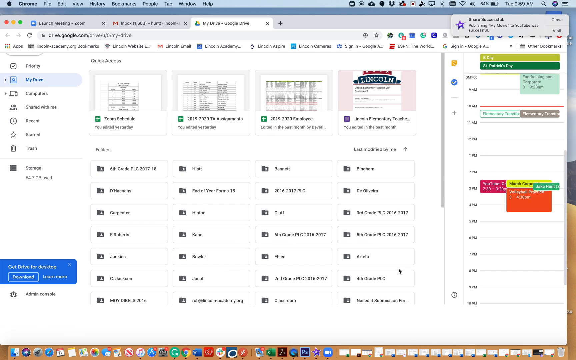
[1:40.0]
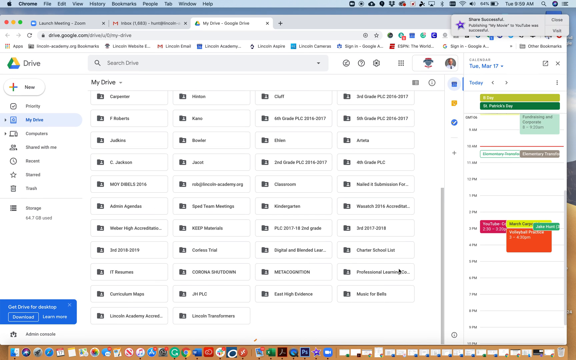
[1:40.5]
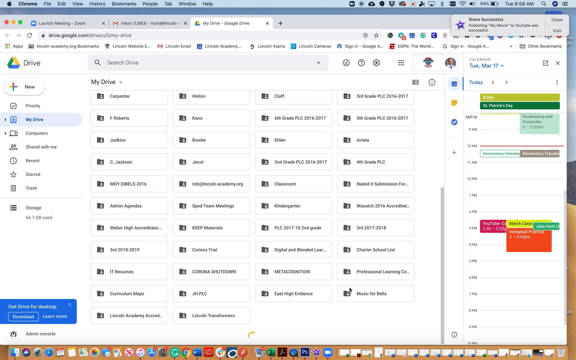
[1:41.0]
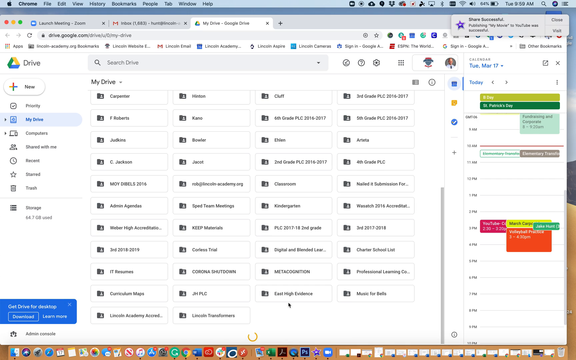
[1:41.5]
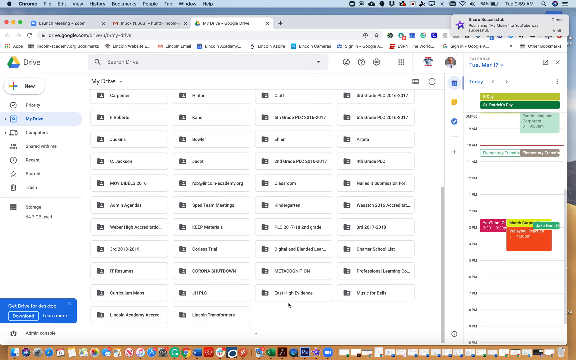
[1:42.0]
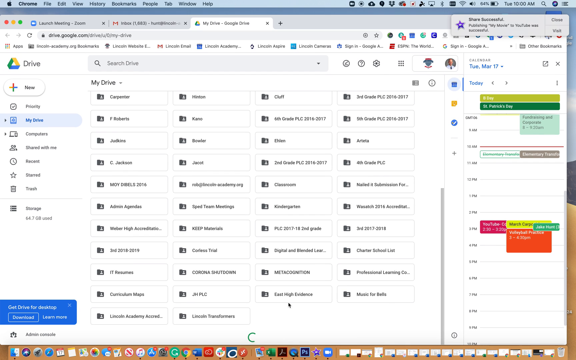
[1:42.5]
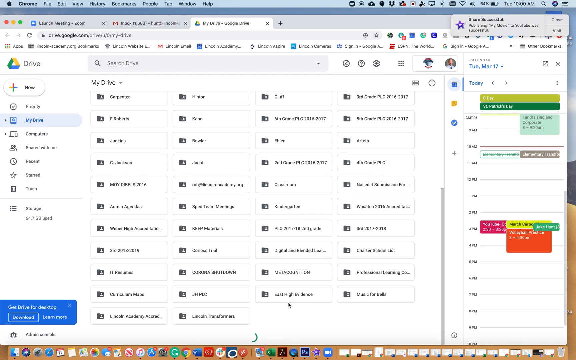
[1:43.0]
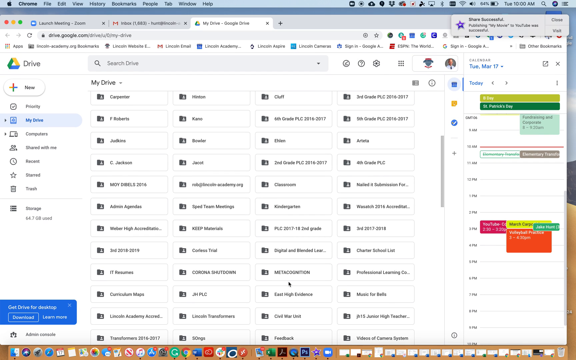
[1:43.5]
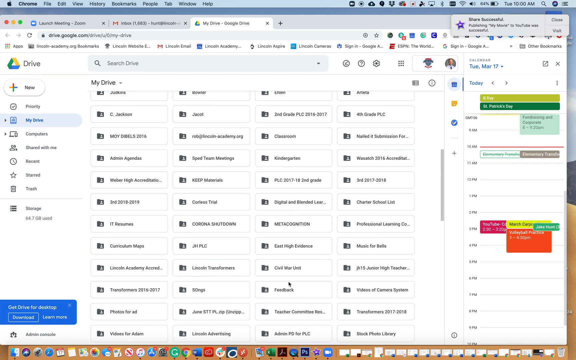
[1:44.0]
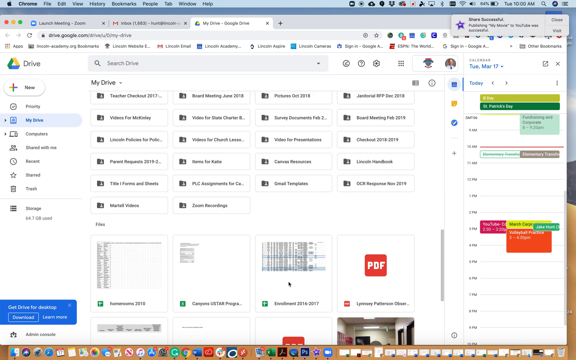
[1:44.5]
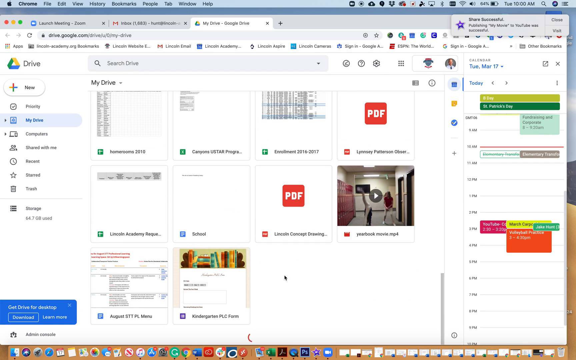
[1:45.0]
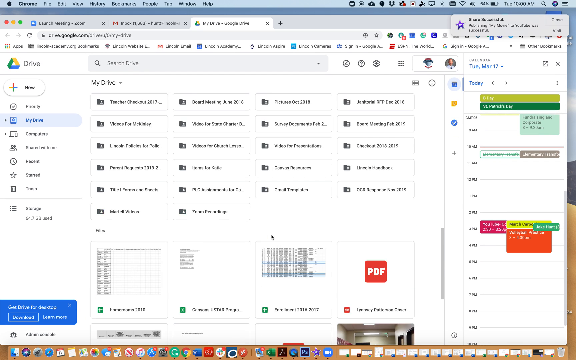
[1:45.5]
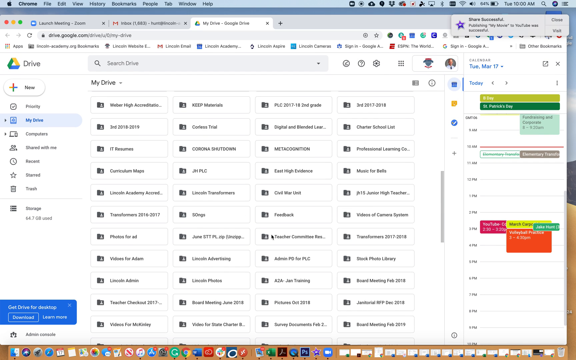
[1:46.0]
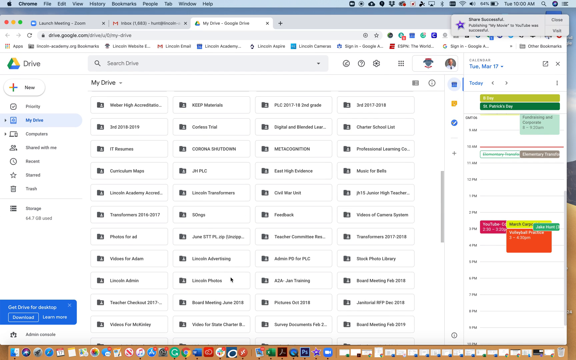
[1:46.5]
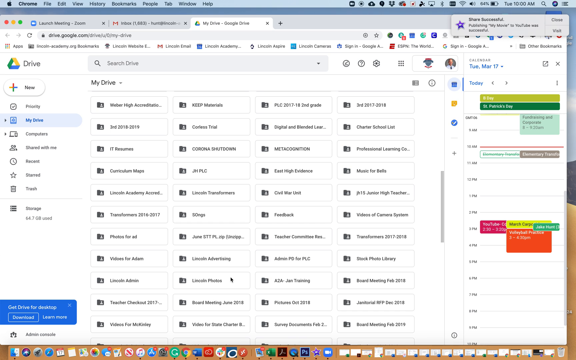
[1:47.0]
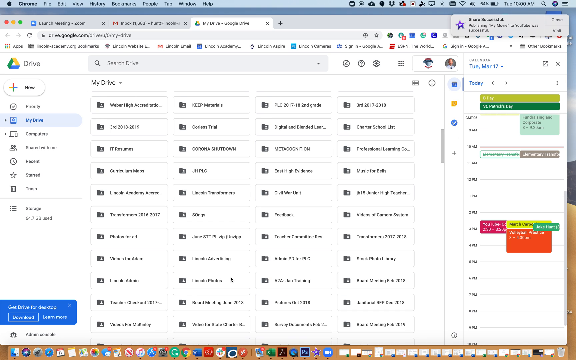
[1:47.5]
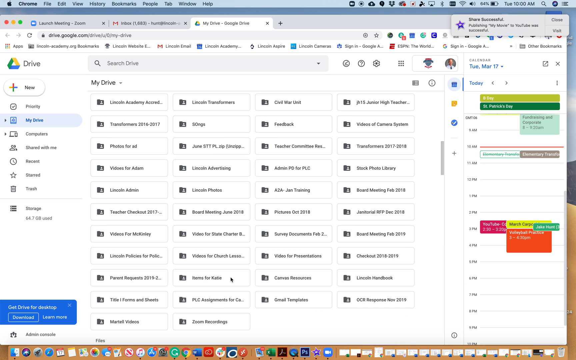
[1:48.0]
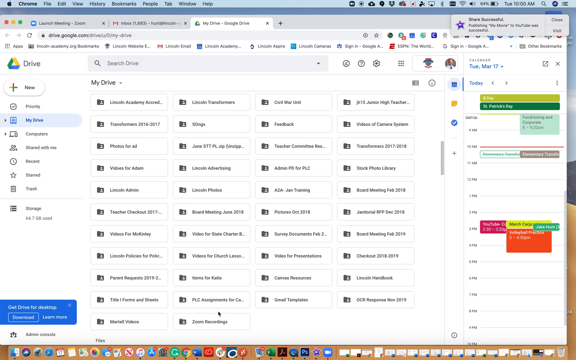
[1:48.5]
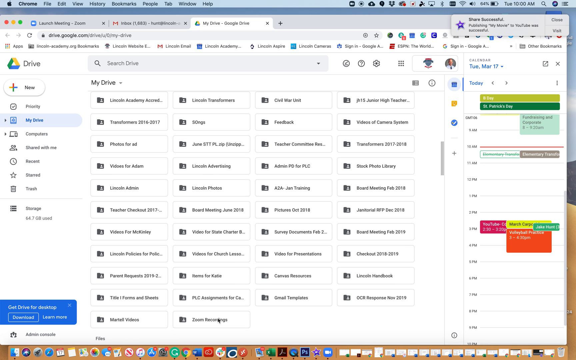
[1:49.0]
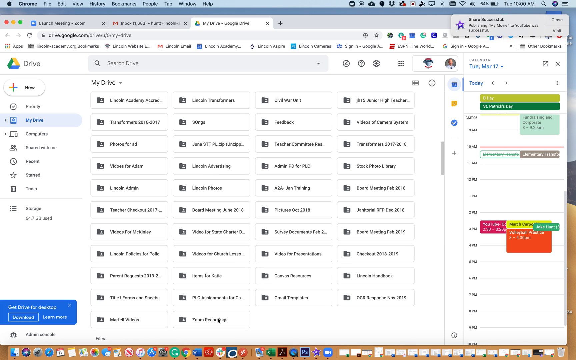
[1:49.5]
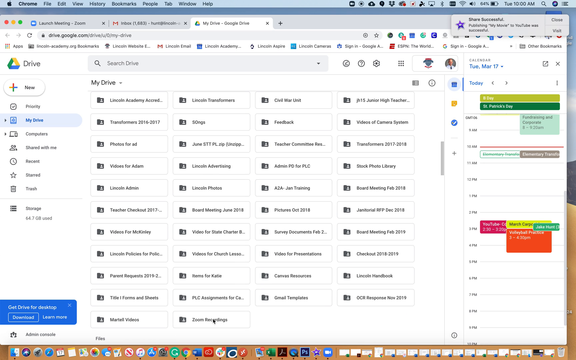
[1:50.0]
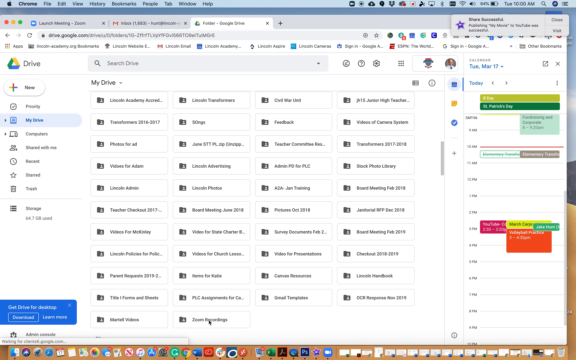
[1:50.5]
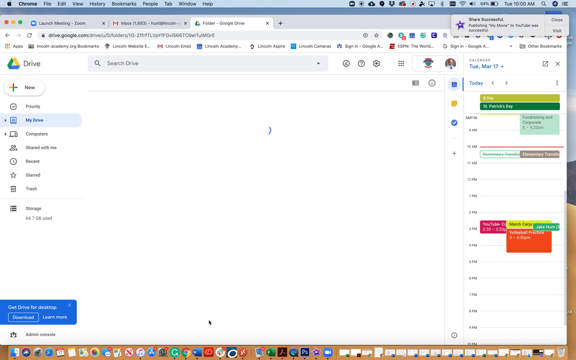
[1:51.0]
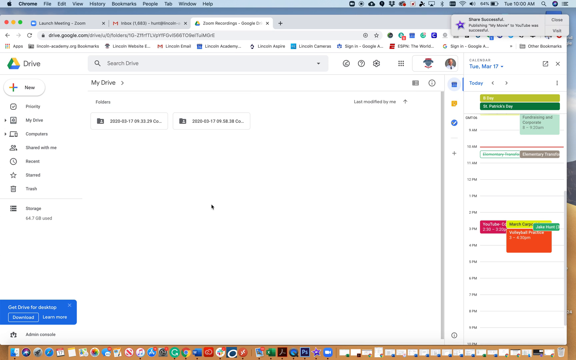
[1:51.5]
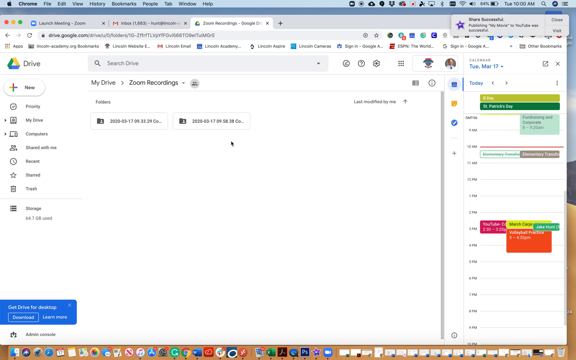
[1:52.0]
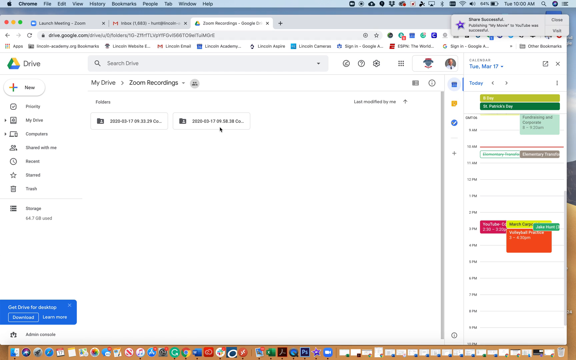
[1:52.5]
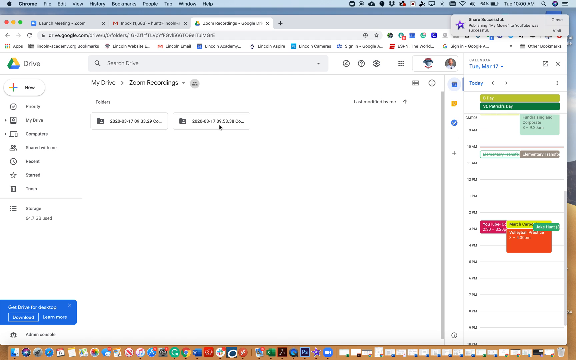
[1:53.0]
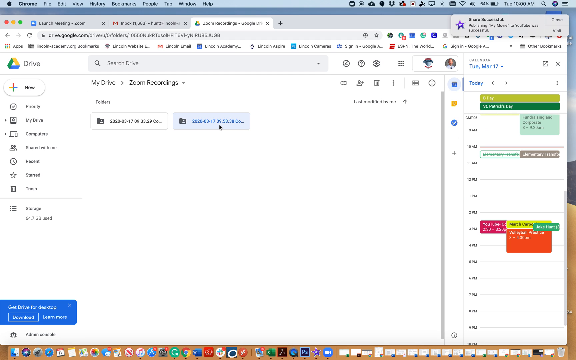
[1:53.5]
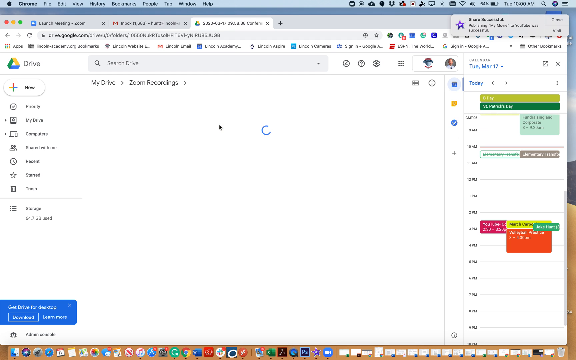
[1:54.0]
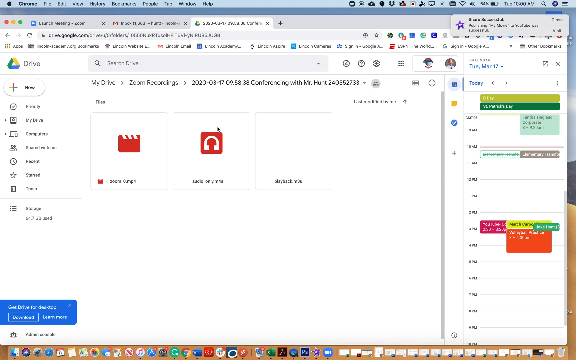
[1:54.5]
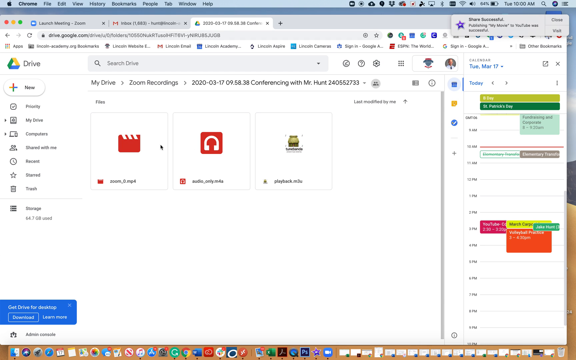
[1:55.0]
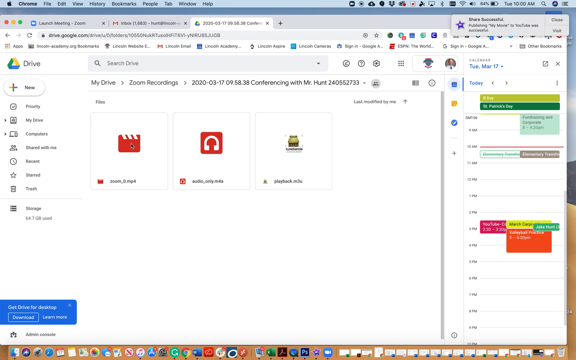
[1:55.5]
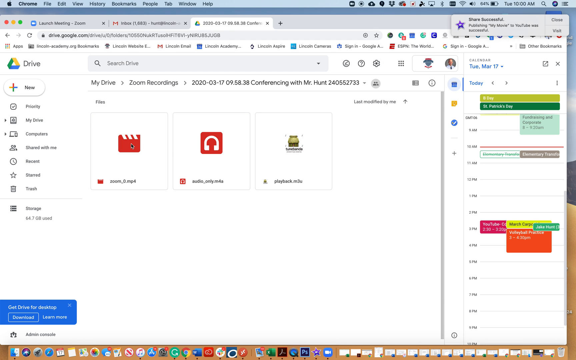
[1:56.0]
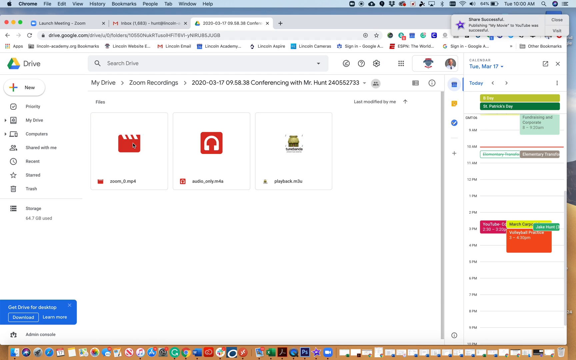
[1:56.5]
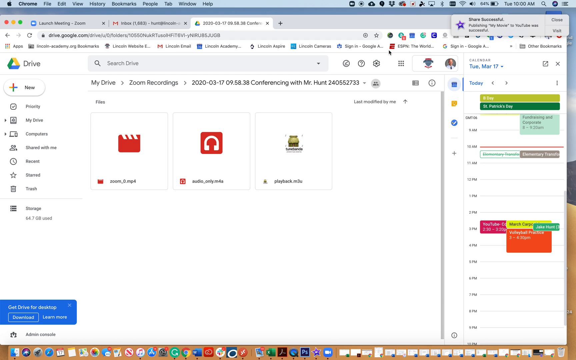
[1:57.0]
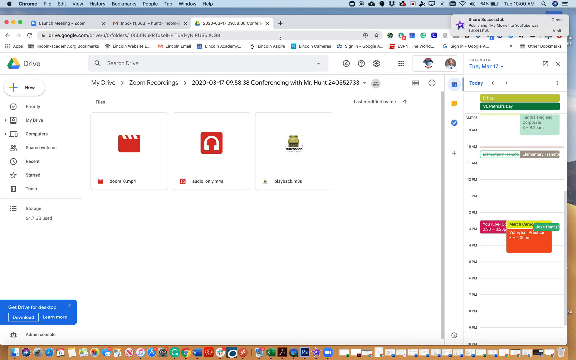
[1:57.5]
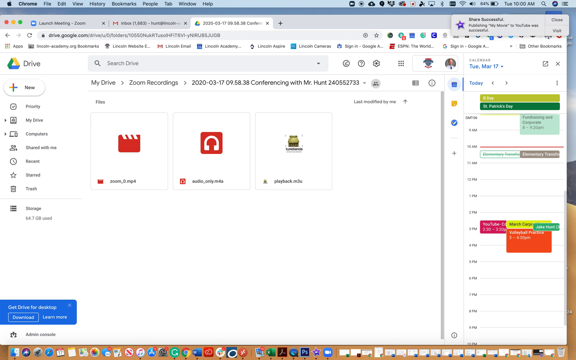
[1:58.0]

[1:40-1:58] On the Google Drive website, the user scrolls down and up his Google Drive folders. He selects a file titled Zoom Recordings and is transferred to the Zoom Recordings folder, where two items are listed. He selects the second Zoom recording, which is highlighted in blue. The file name is "2020-03-17 09.58.38 Conferencing with Mr. Hunt 240552733." Within that folder are three options, none of which he selects. At the top is a red rectangle logo with white waves, which indicates a video file. To the right of that logo is a red square logo with white headphones inside, and to the right of that is a playback logo that is unidentifiable because it is blurry. The cursor is brought to the top right of the page, and nothing is selected. On the right side of the screen is a Google Calendar with the date Tuesday March 17.